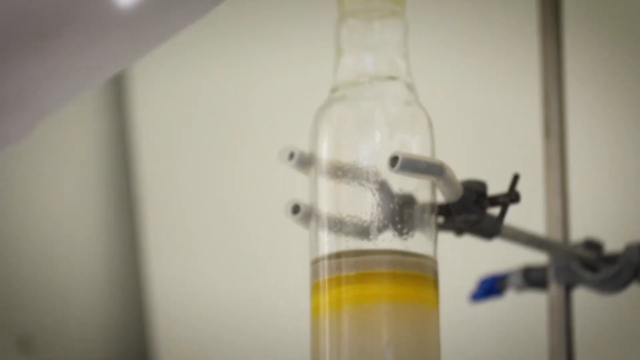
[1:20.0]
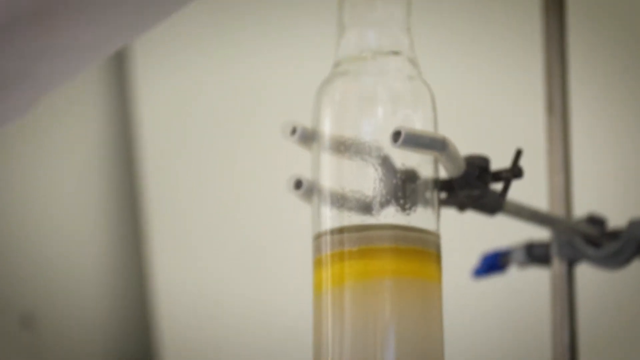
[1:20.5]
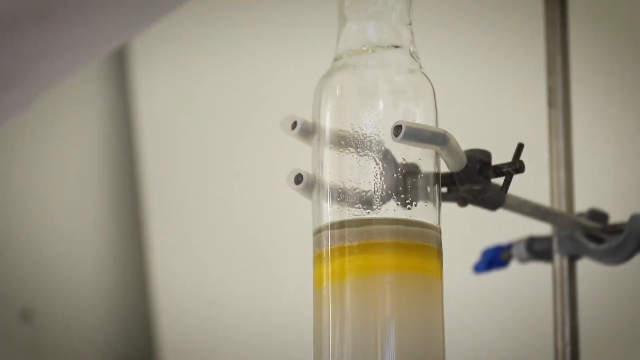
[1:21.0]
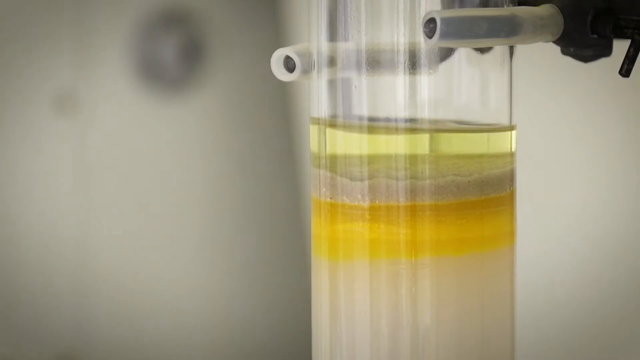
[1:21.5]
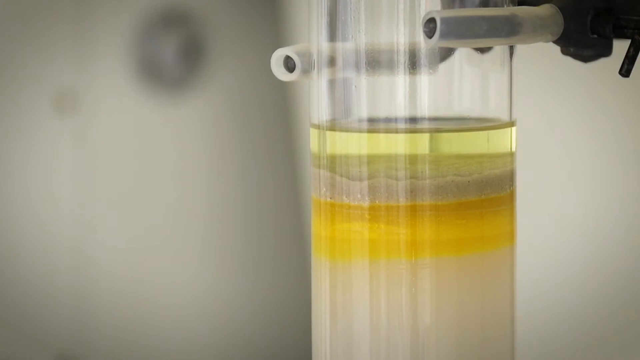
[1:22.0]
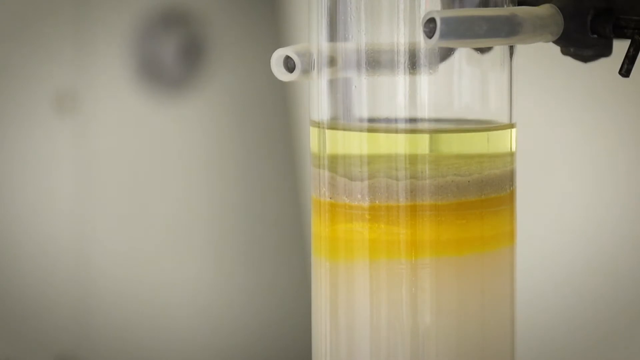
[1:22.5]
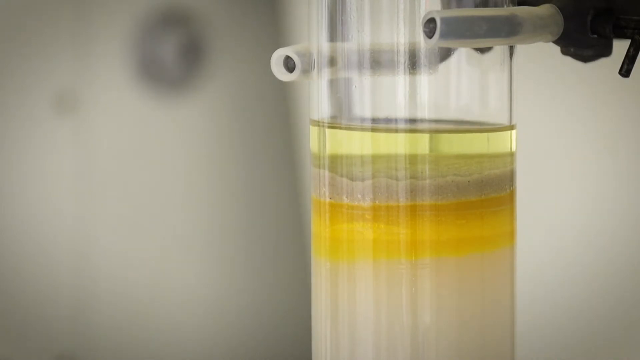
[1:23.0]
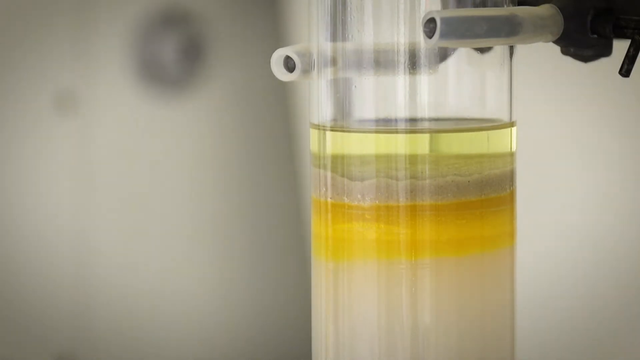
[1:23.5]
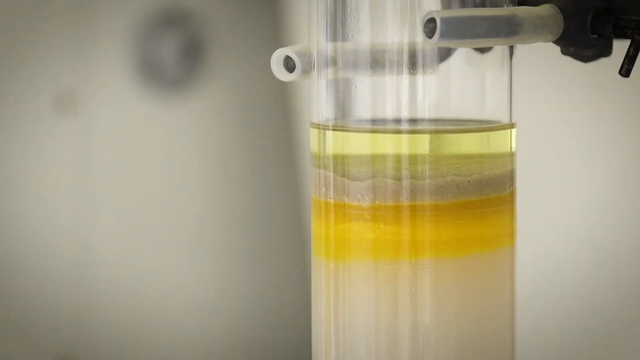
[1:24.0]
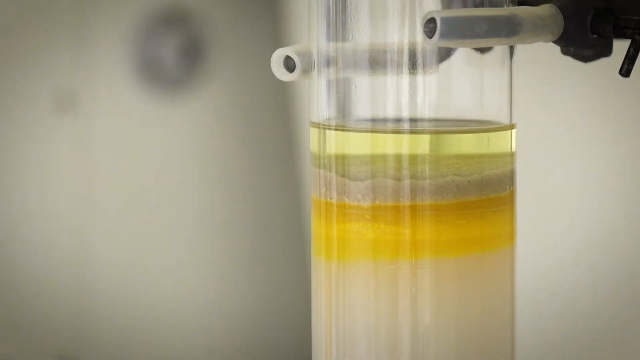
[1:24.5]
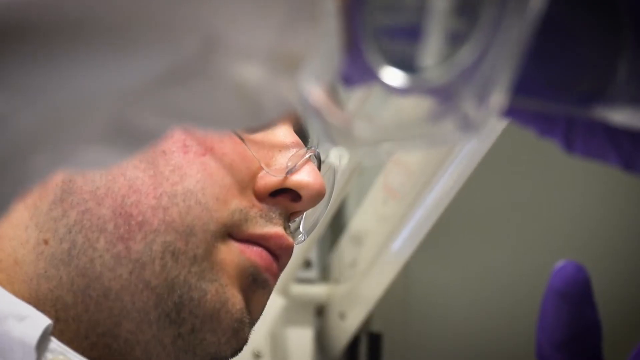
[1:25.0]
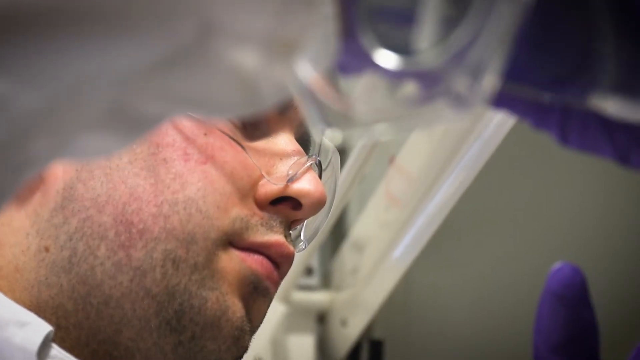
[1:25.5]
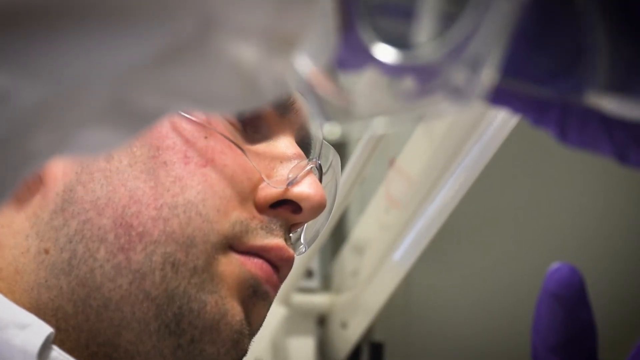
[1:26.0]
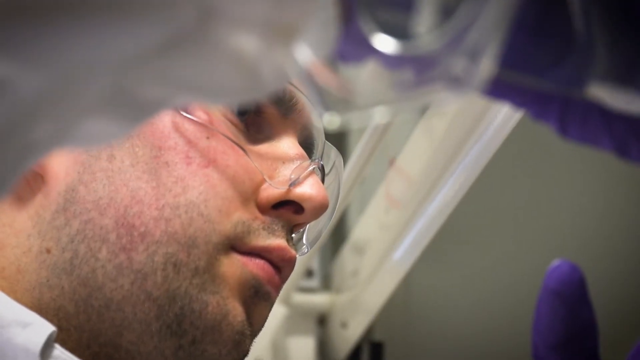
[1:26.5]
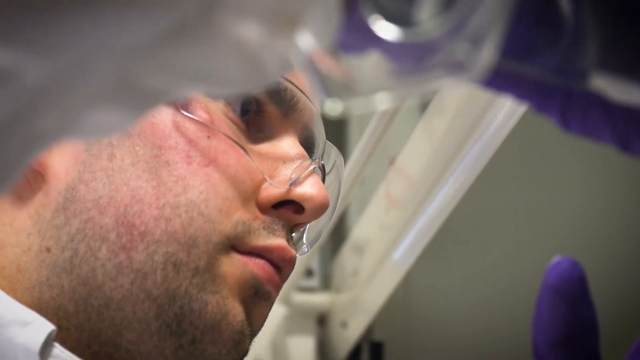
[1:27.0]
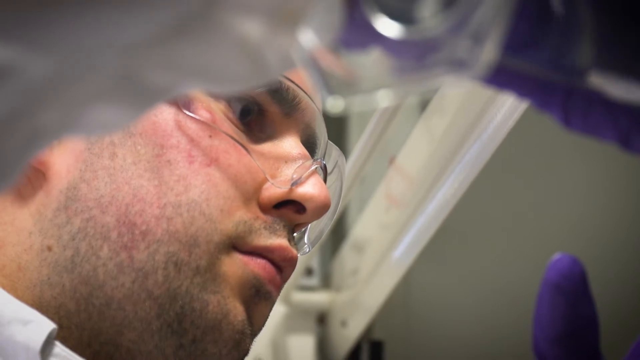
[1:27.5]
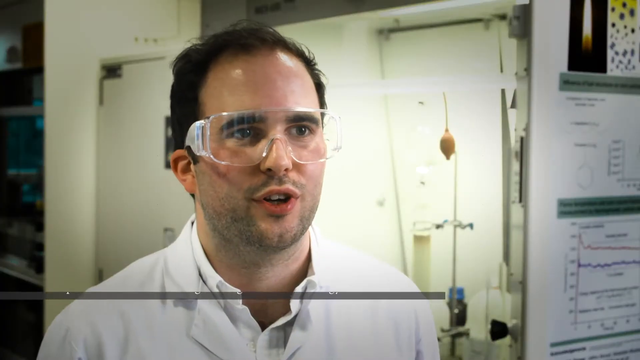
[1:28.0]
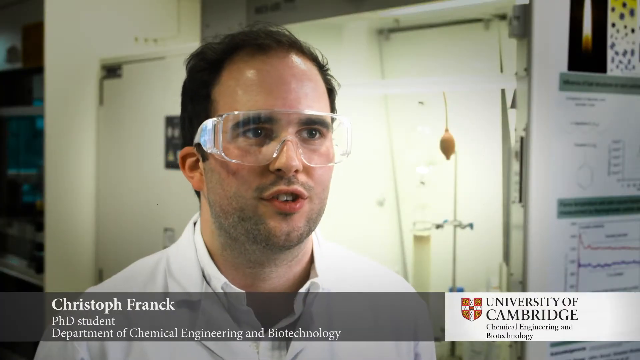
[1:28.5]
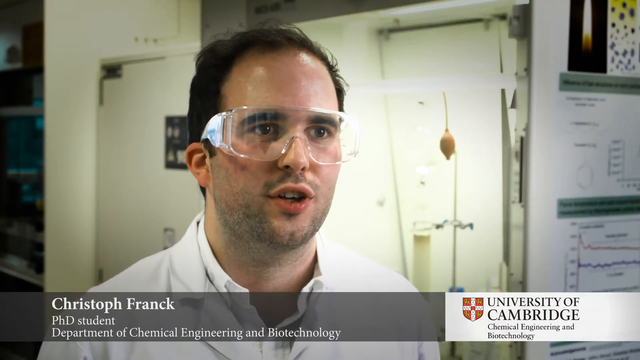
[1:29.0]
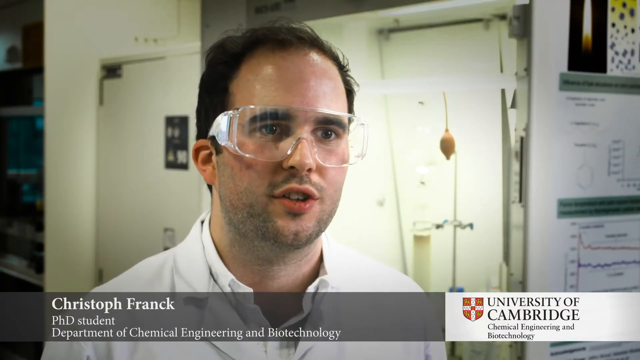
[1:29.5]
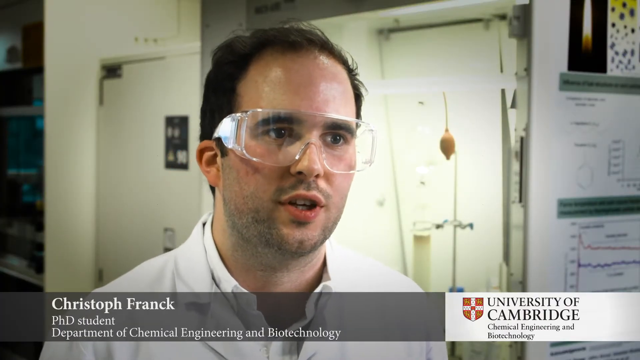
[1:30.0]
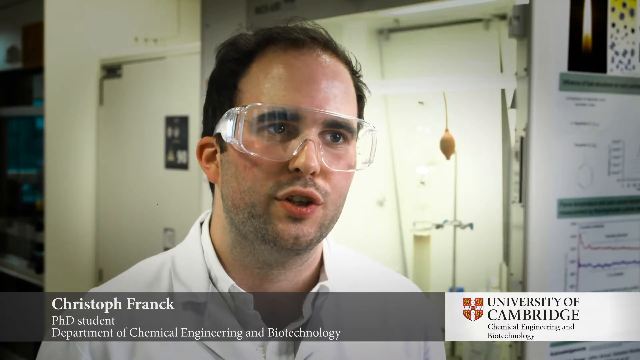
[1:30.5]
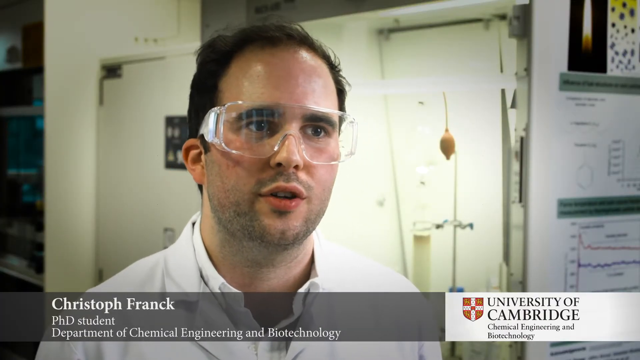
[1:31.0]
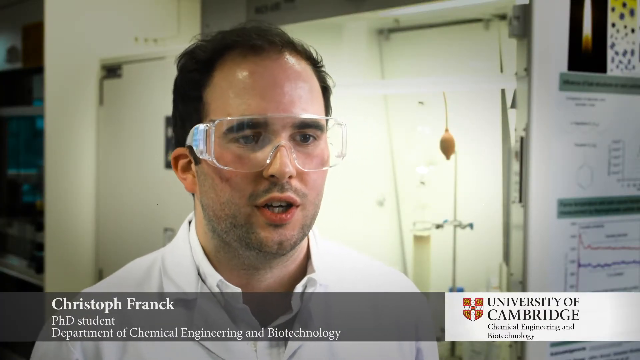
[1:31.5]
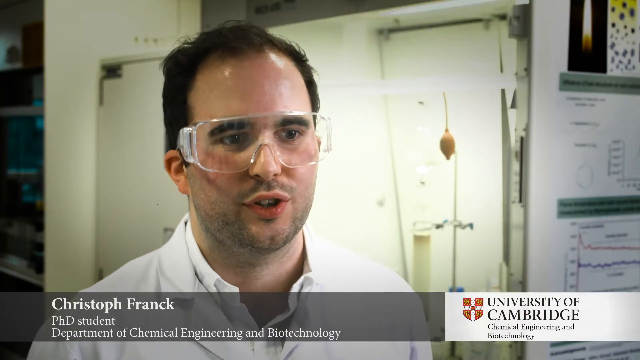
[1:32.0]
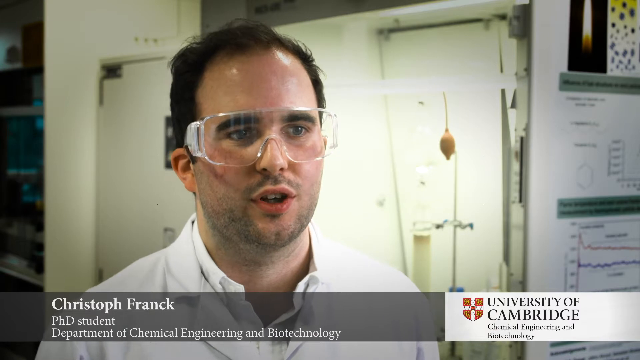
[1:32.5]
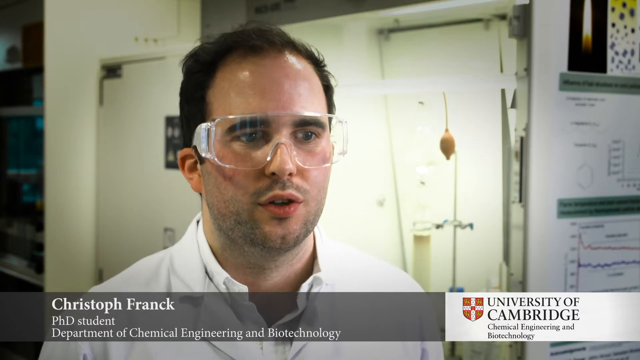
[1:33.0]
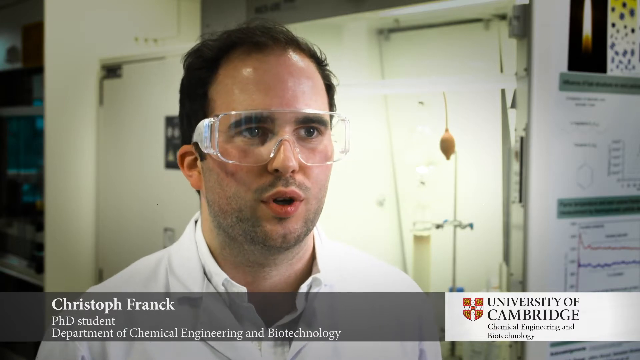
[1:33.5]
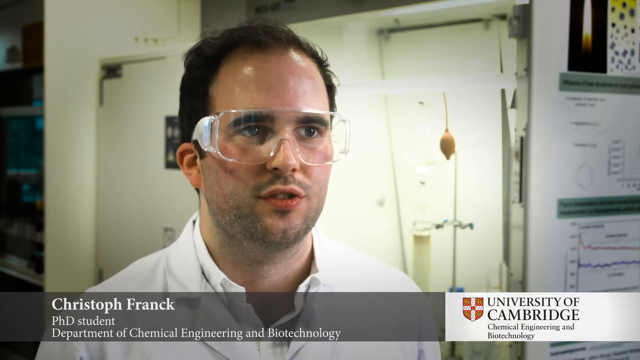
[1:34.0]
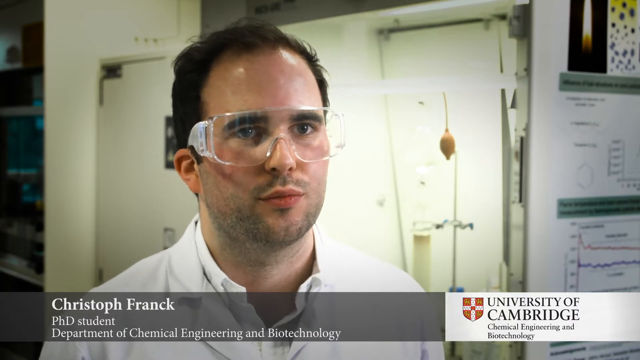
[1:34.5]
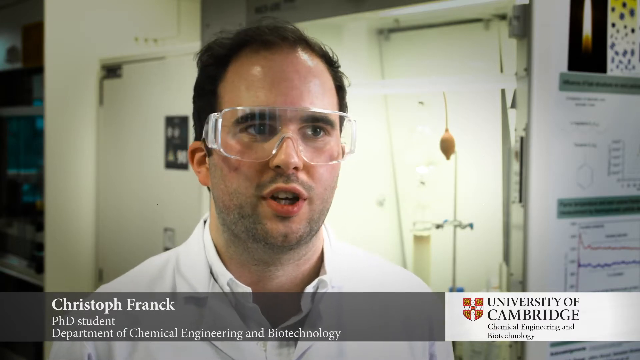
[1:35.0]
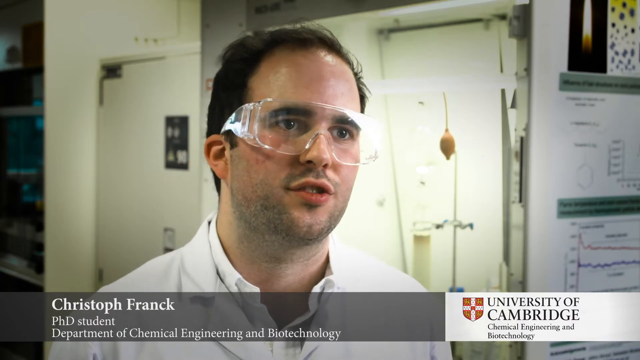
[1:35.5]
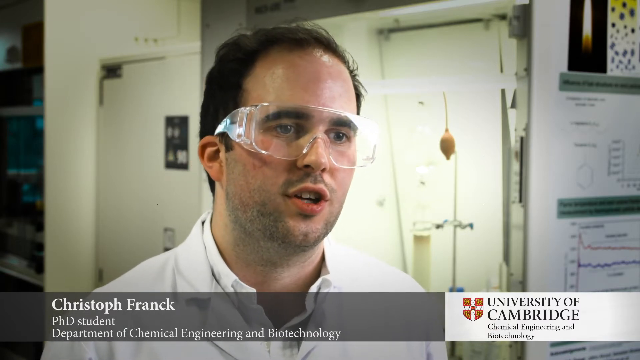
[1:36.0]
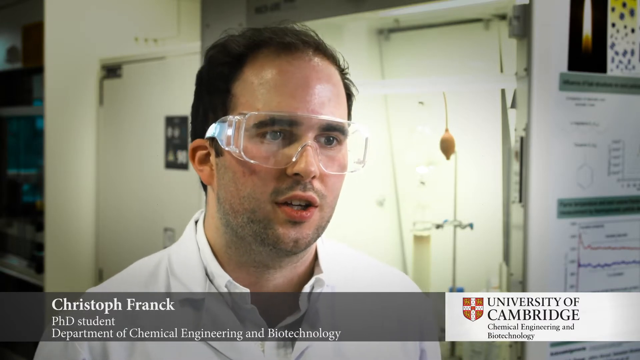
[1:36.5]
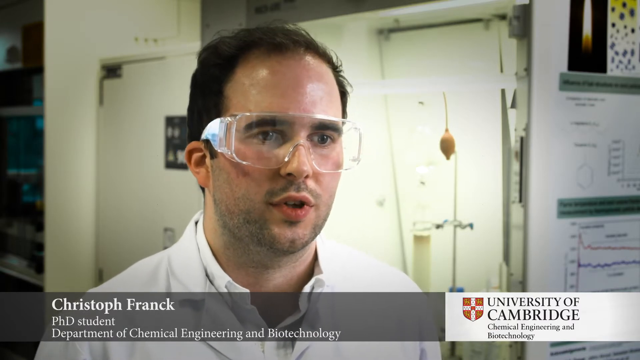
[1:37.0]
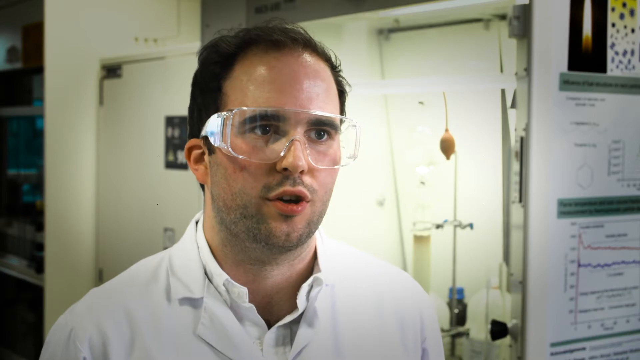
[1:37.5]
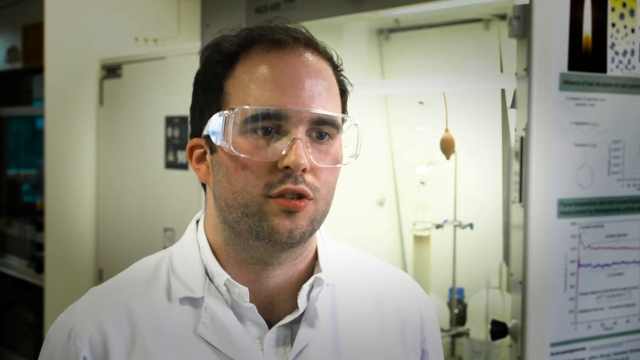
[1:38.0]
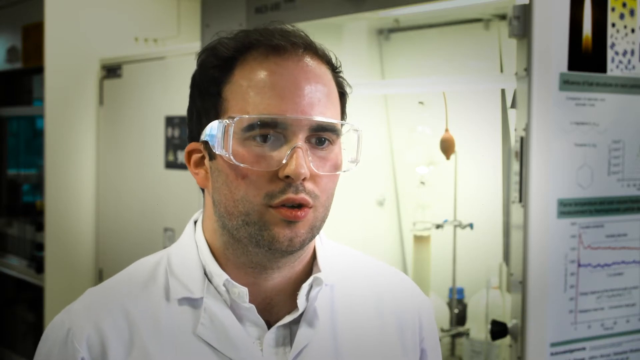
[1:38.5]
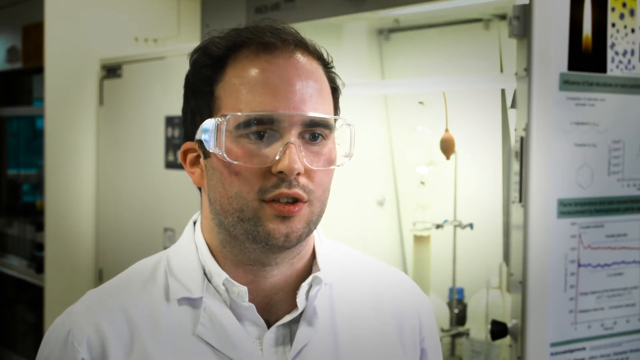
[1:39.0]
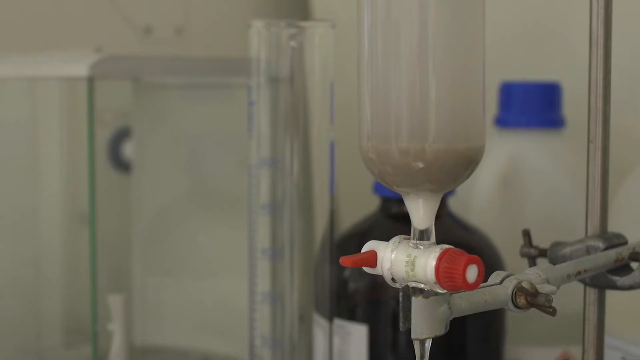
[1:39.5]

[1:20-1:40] A chemical science experiment is shown: a long, big beaker hangs with yellow liquid in it, in layers of different shades of yellow. Christophe Franck, a PhD student in chemical engineering and biotechnology, is interviewed. He wears safety goggles and a lab coat, apparently over a white button-down shirt. He adds liquid to his experiment, and in between he is interviewed. He has a slight beard and a mustache and darker black hair. His experiment is behind him during the interview, and to his right is a chart with different waves and measurements on it, probably on poster-size paper.